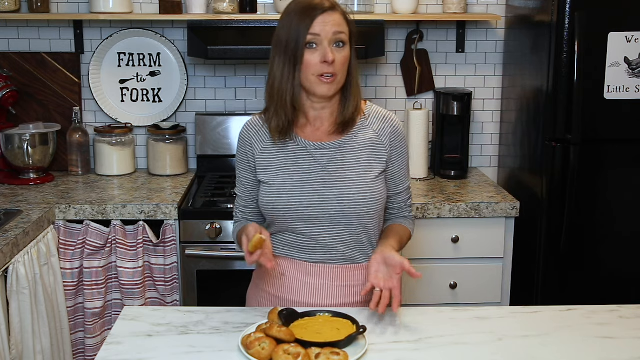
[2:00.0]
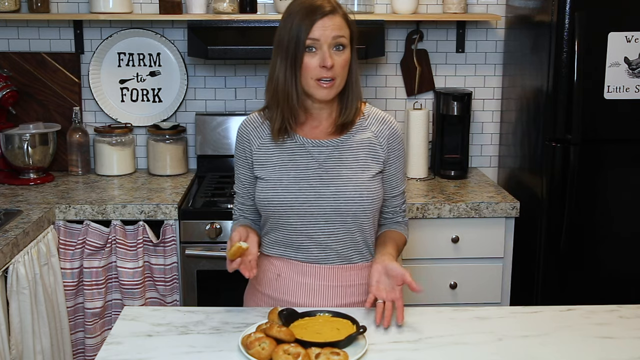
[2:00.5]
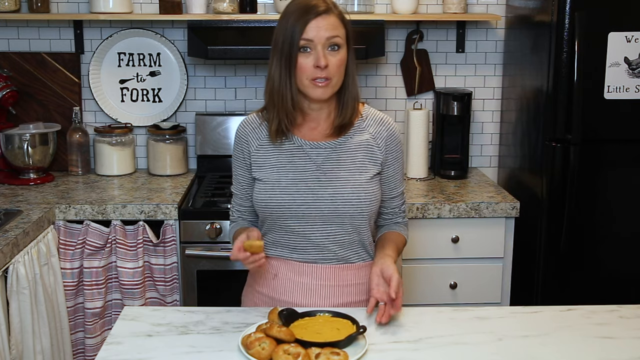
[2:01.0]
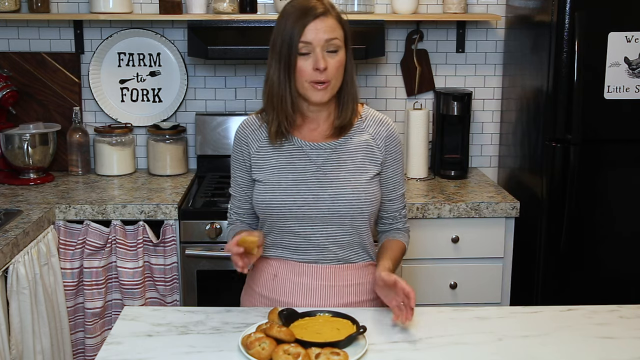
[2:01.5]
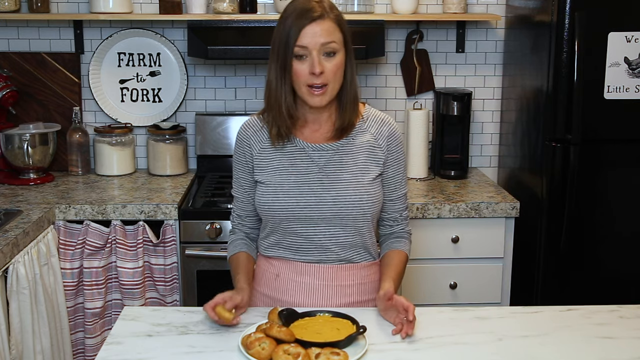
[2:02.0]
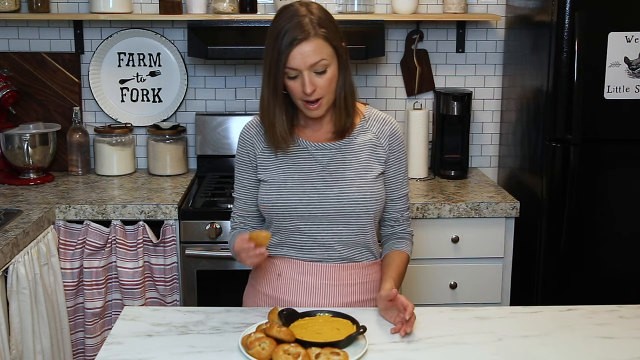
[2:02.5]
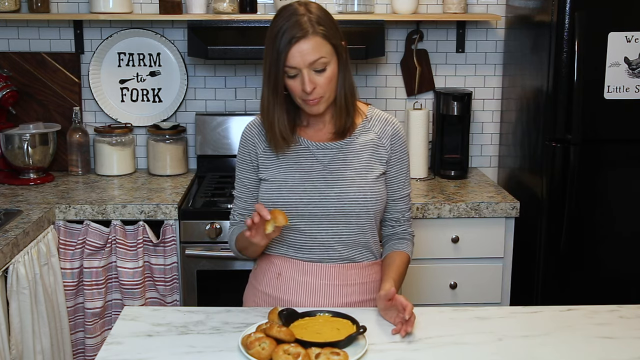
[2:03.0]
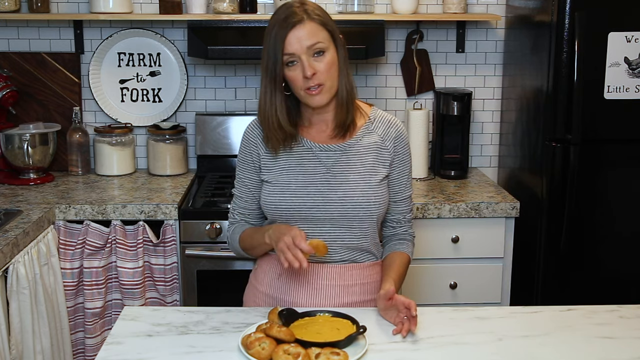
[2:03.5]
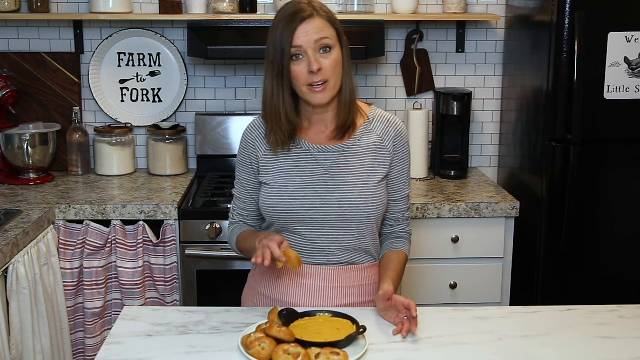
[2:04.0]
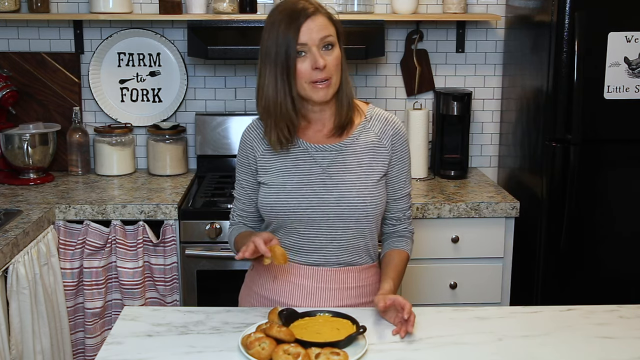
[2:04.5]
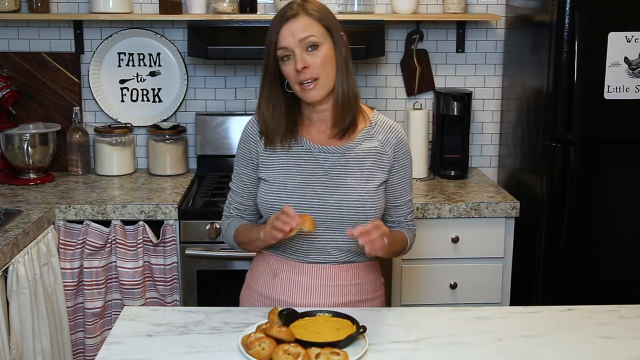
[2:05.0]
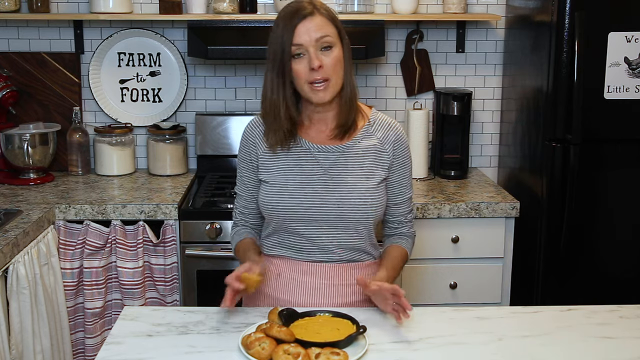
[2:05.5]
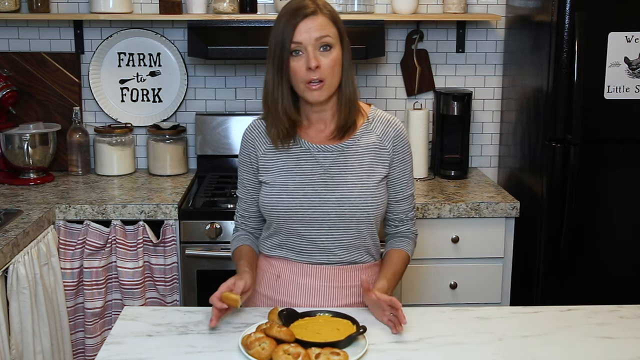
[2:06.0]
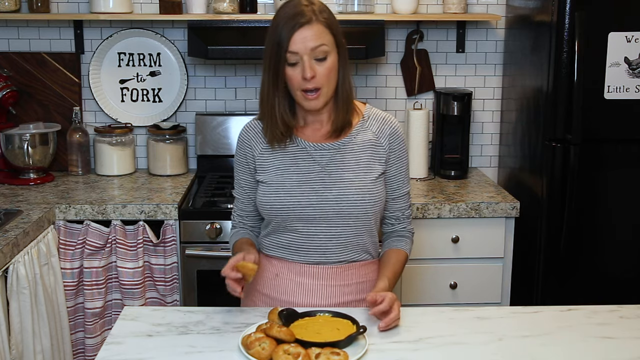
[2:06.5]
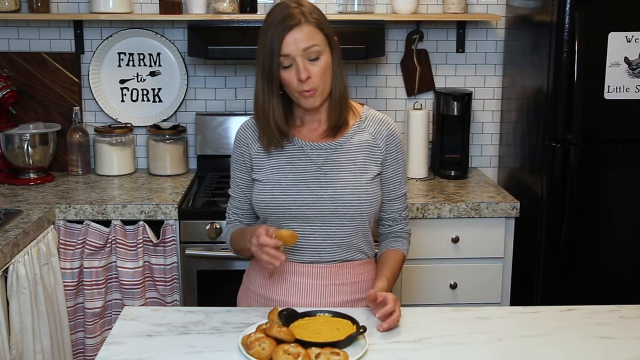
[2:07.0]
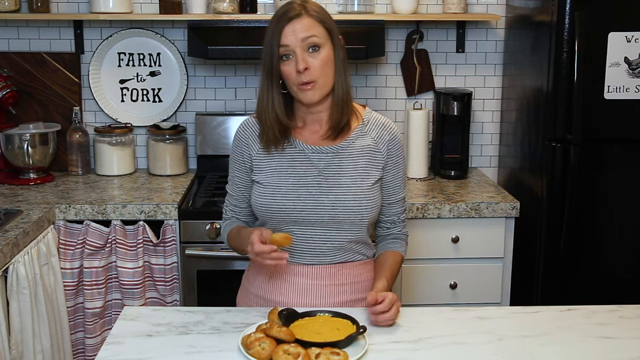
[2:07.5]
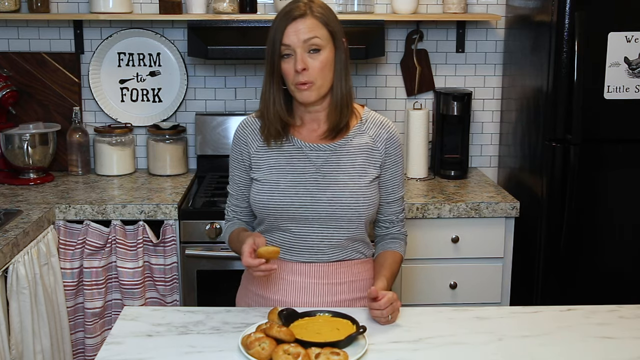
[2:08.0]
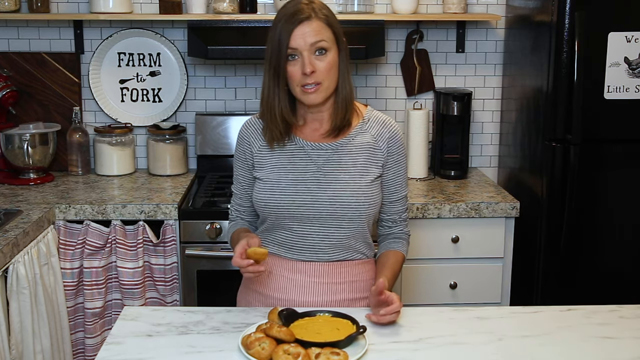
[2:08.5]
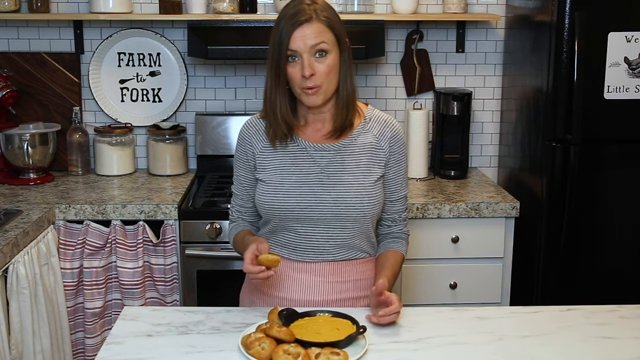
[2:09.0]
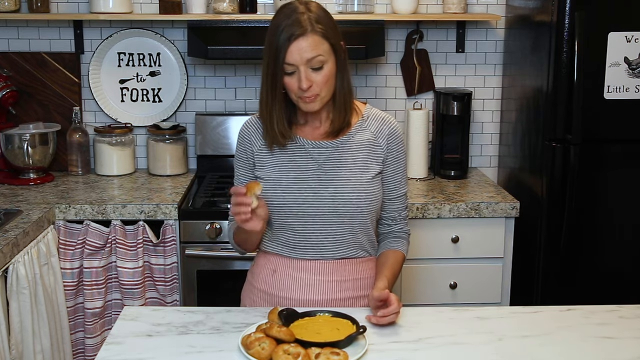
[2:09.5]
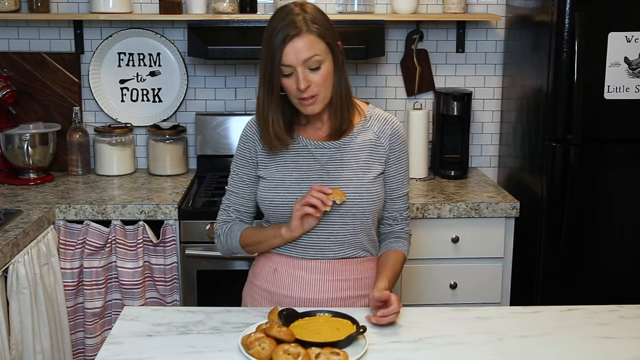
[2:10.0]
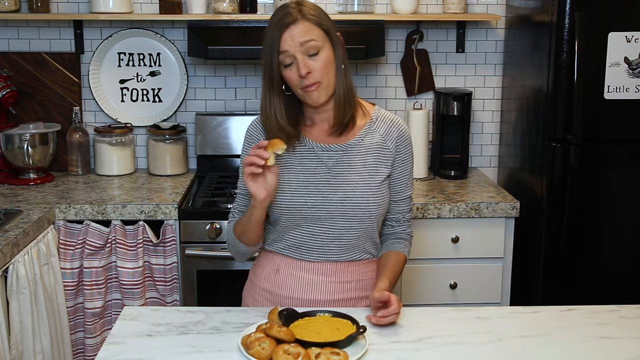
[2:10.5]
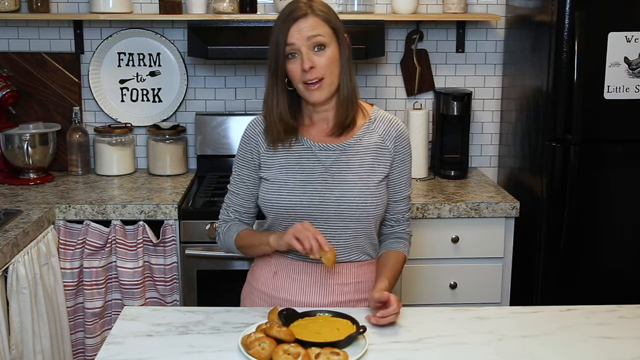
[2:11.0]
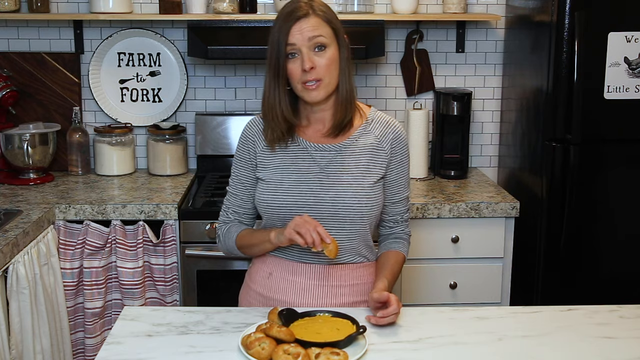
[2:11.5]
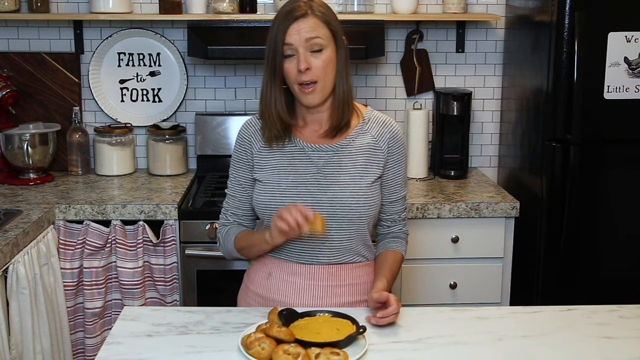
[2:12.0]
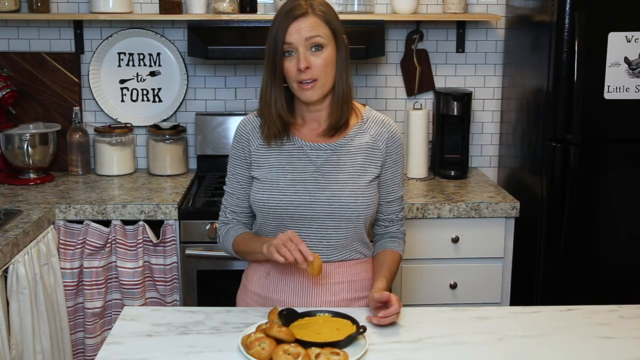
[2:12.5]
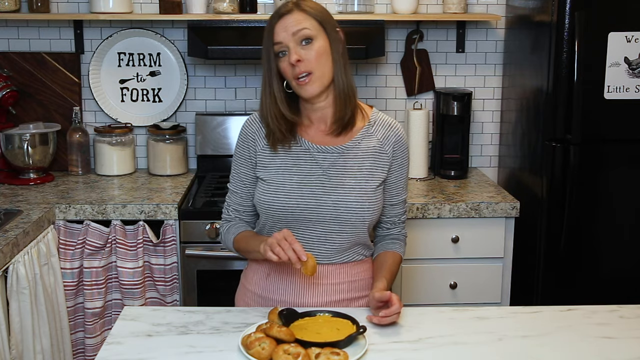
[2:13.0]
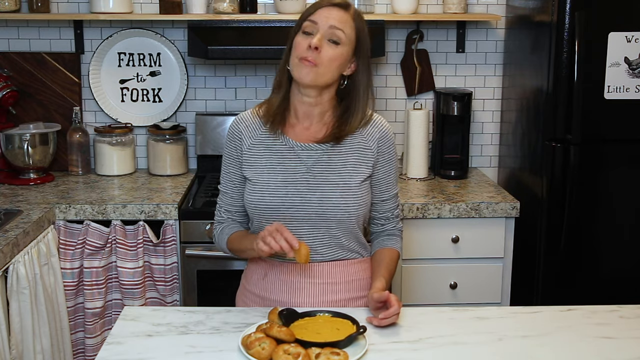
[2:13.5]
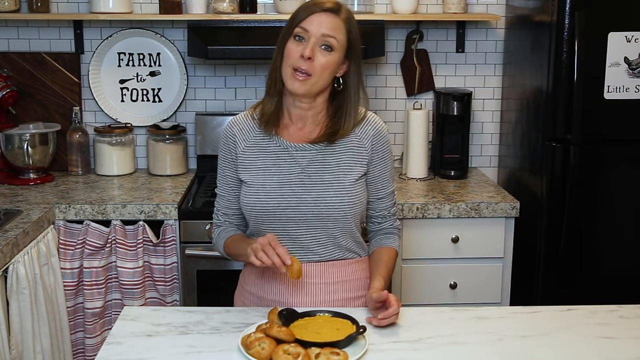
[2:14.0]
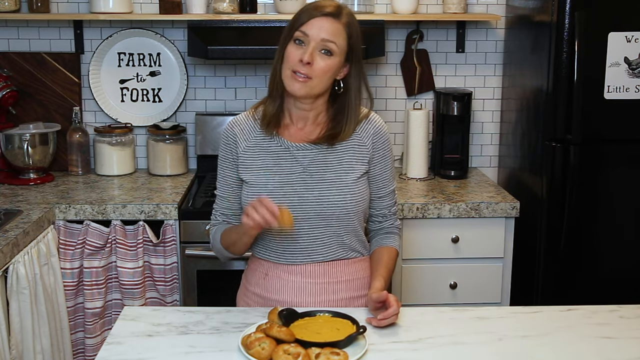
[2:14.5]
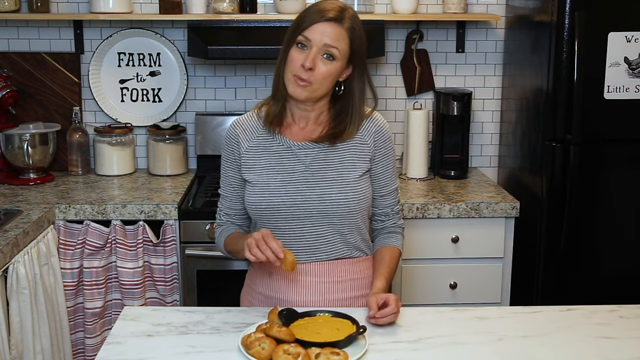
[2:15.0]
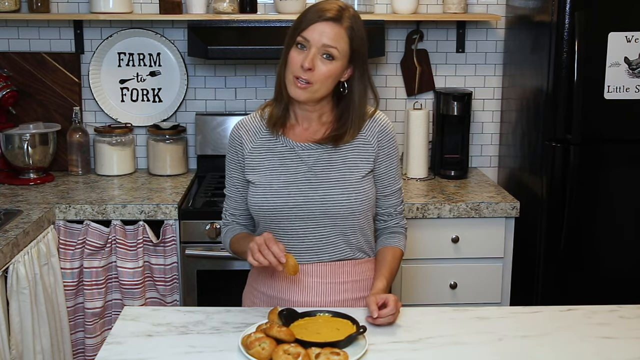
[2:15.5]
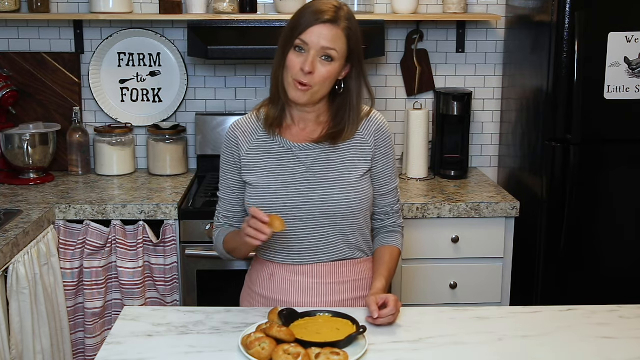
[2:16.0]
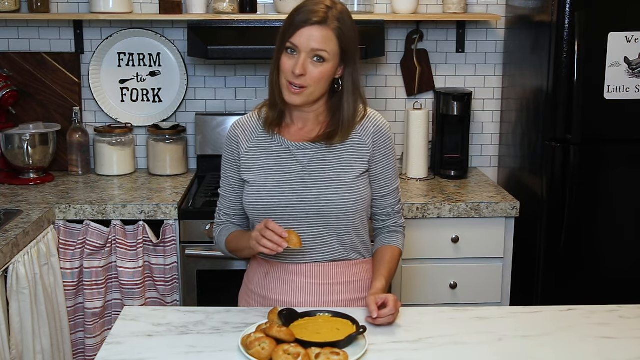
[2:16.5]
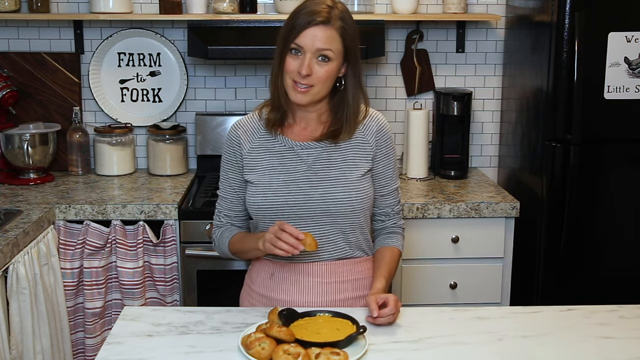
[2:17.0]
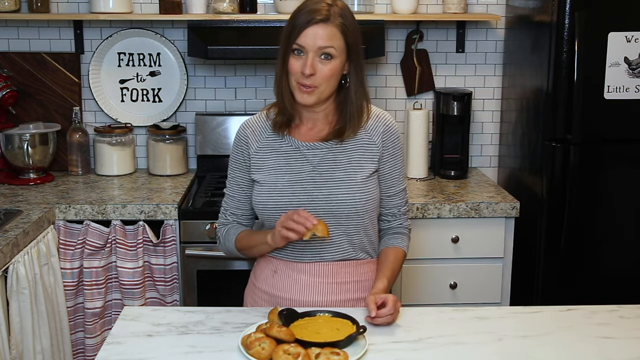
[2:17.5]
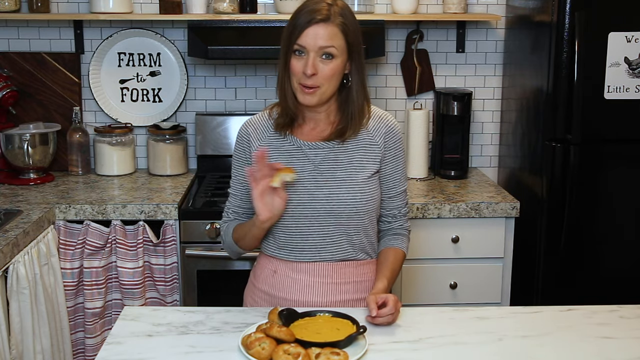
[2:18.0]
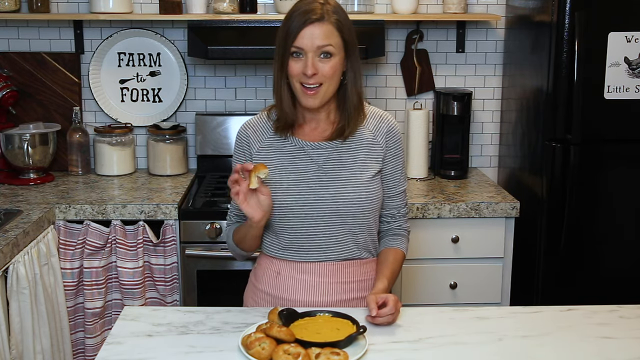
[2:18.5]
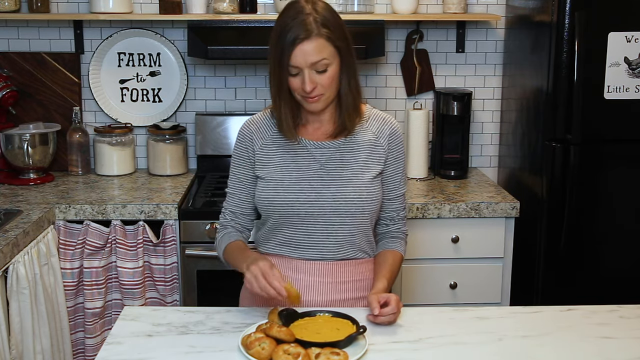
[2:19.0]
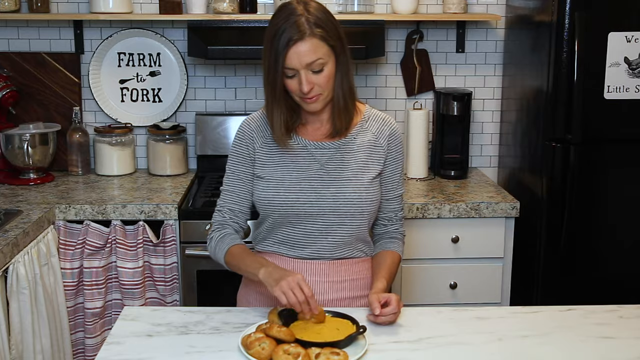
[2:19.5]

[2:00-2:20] She shows the final product and eats what looks to be a soup with some bread. As she eats, she engages with the audience, using hand gestures, and tastes the food. The kitchen is very clean. Before the video ends, she waves.